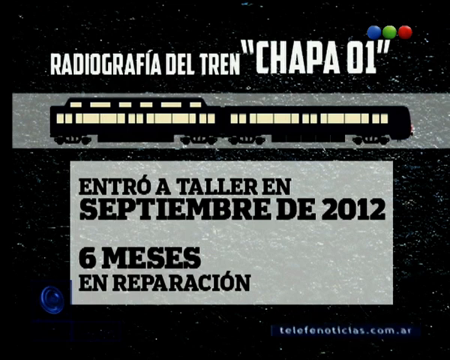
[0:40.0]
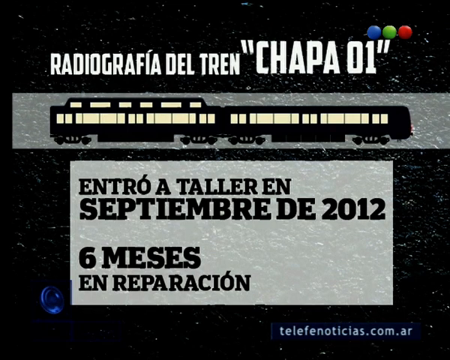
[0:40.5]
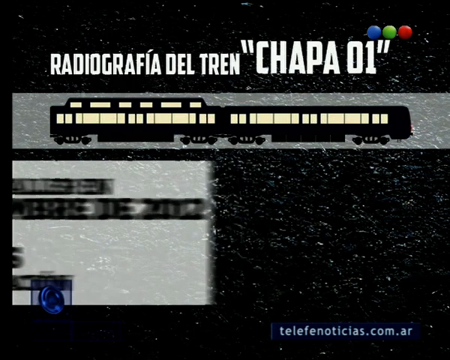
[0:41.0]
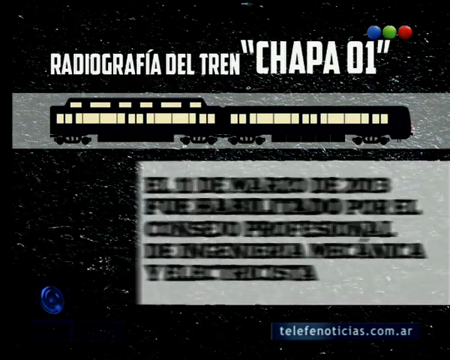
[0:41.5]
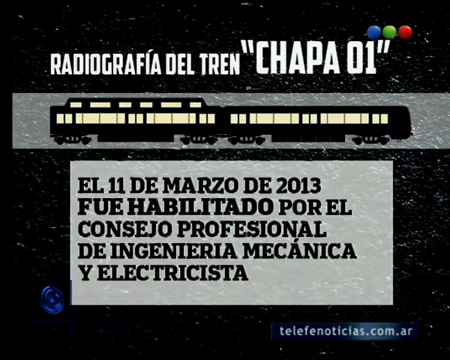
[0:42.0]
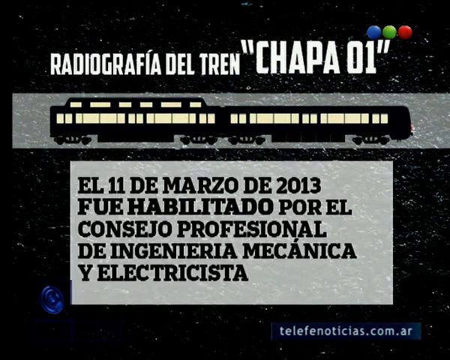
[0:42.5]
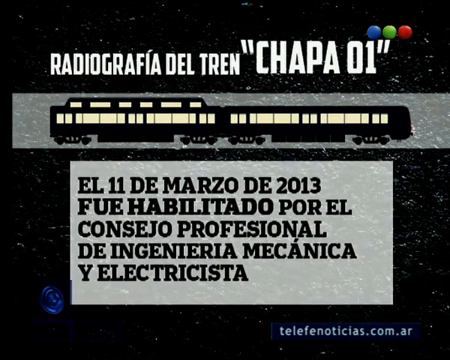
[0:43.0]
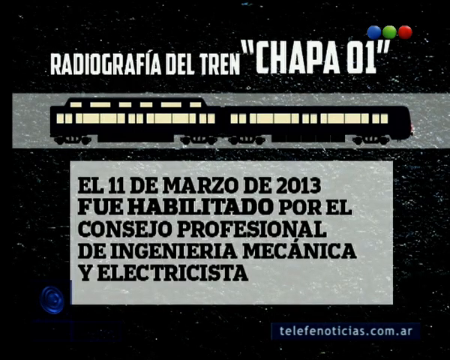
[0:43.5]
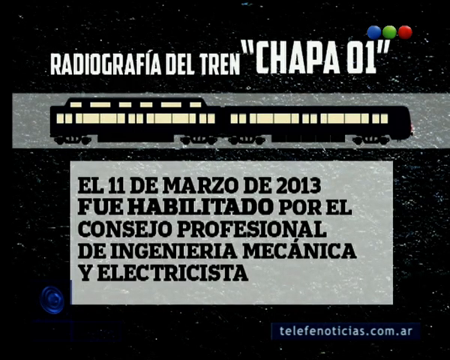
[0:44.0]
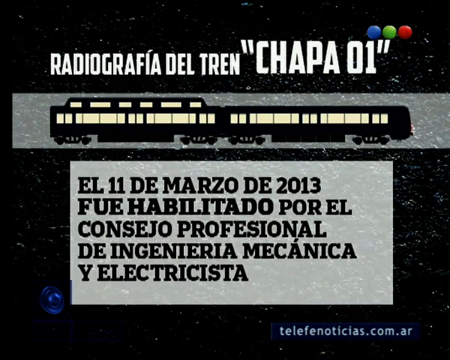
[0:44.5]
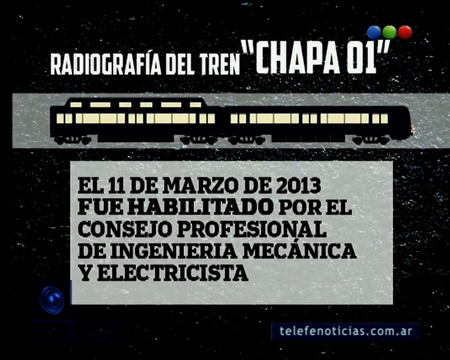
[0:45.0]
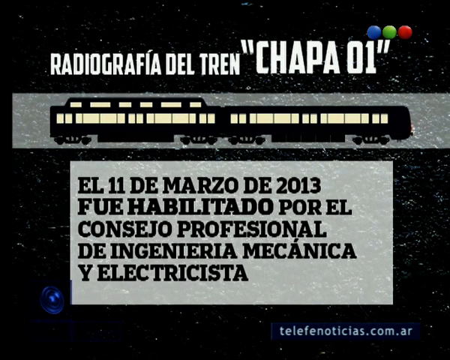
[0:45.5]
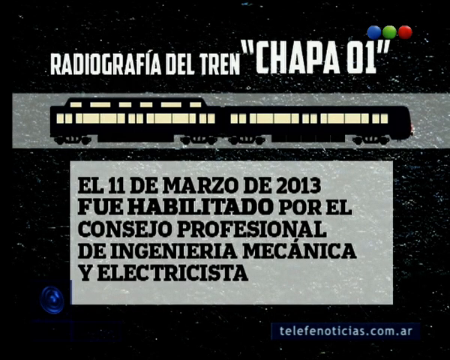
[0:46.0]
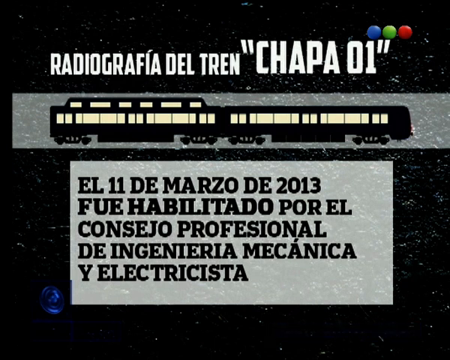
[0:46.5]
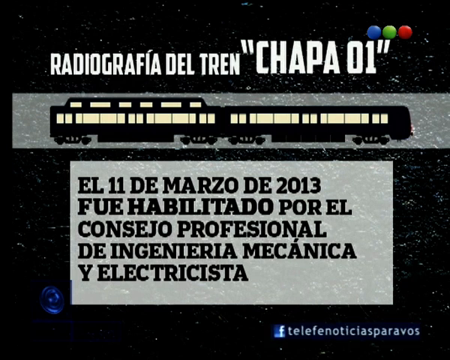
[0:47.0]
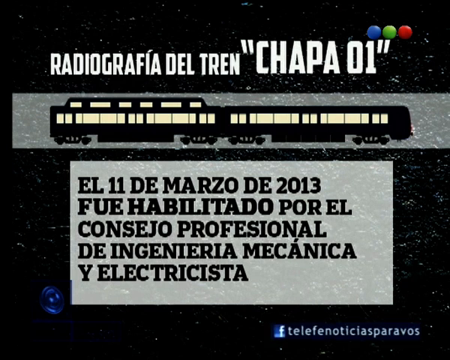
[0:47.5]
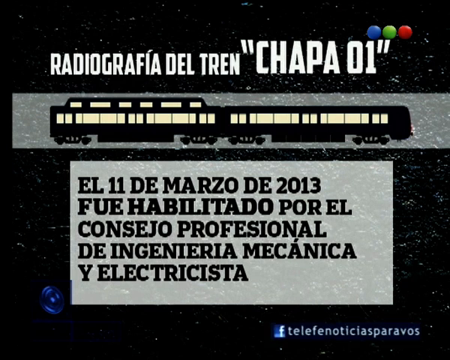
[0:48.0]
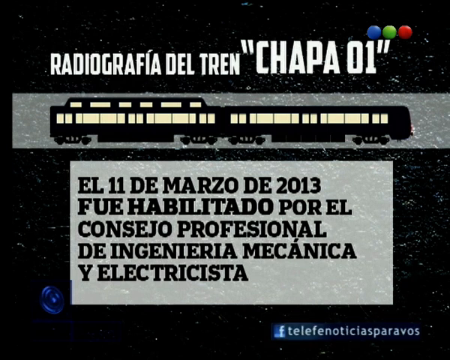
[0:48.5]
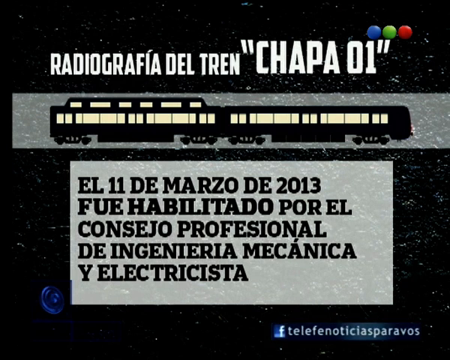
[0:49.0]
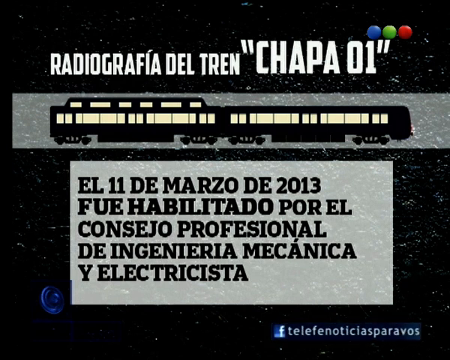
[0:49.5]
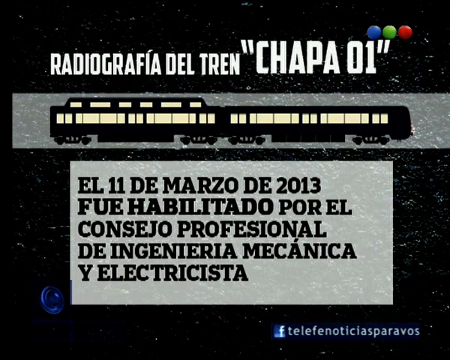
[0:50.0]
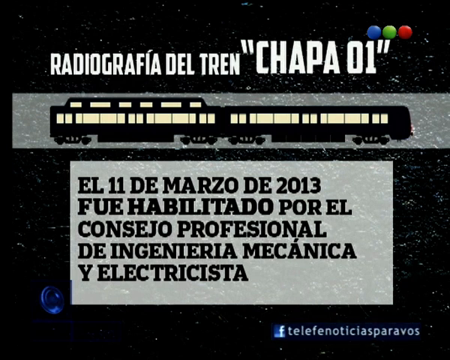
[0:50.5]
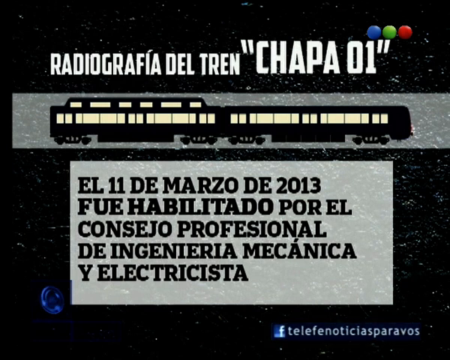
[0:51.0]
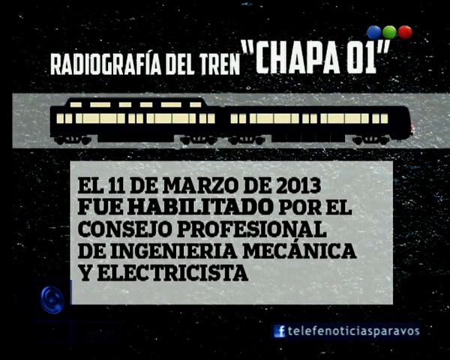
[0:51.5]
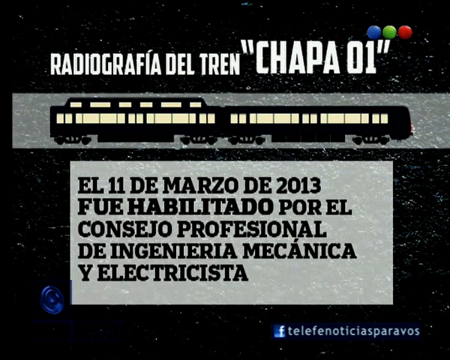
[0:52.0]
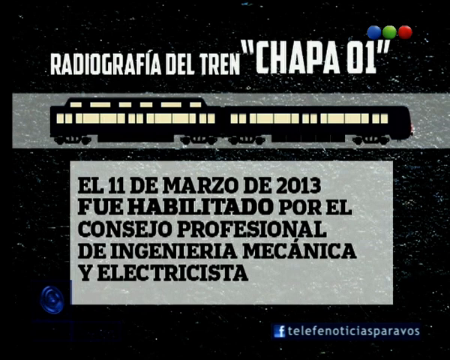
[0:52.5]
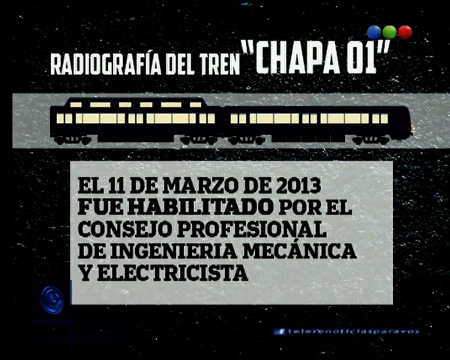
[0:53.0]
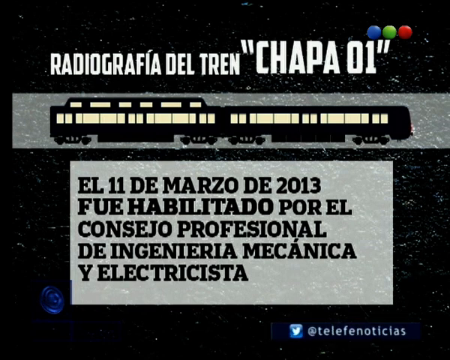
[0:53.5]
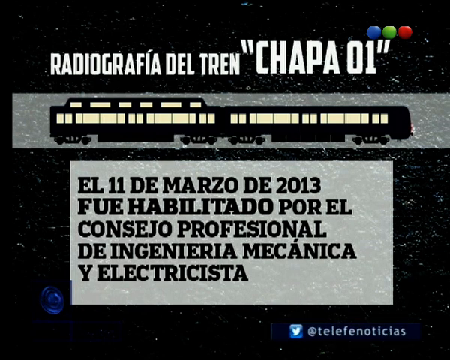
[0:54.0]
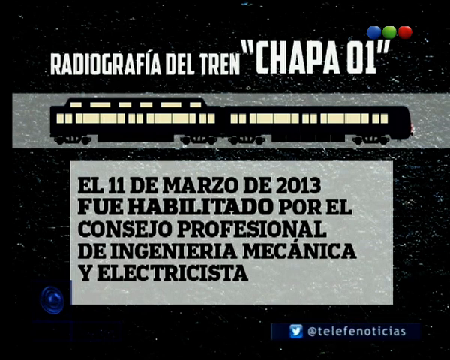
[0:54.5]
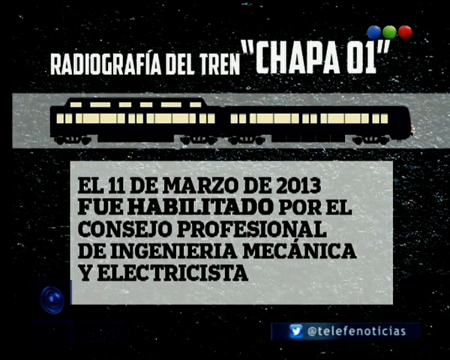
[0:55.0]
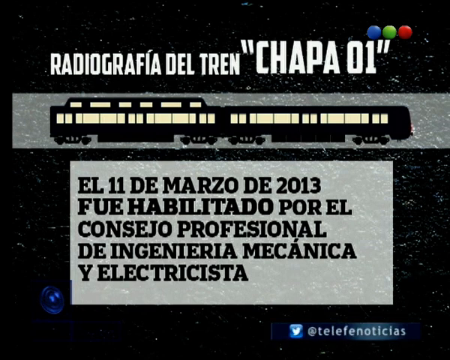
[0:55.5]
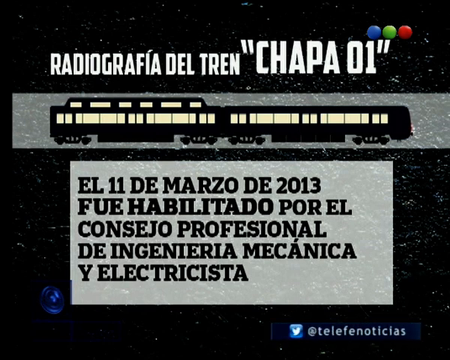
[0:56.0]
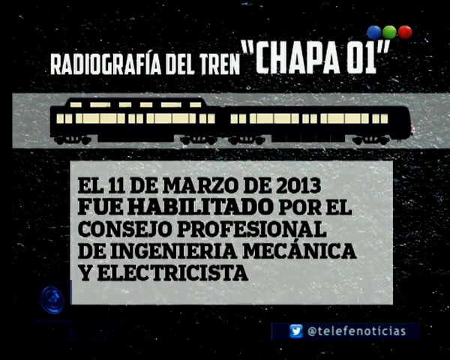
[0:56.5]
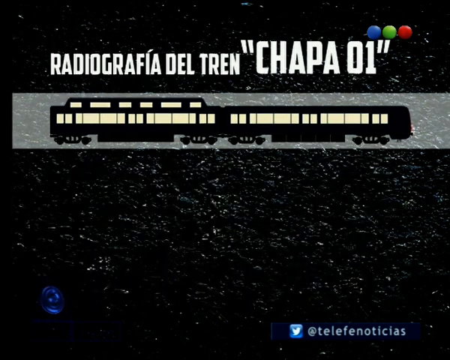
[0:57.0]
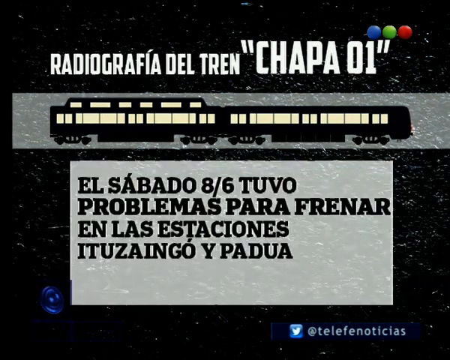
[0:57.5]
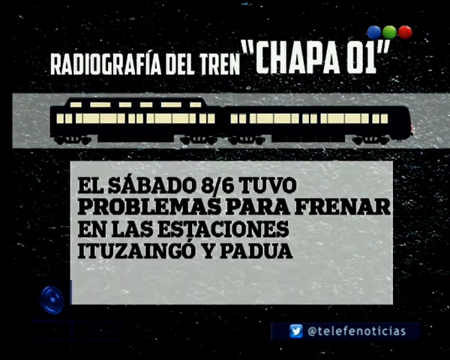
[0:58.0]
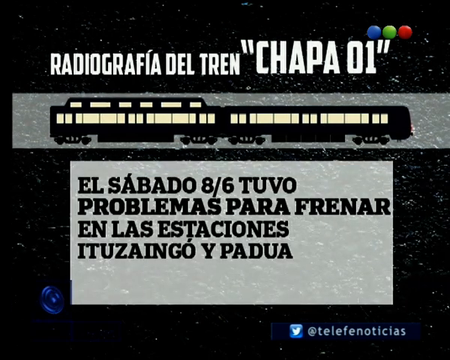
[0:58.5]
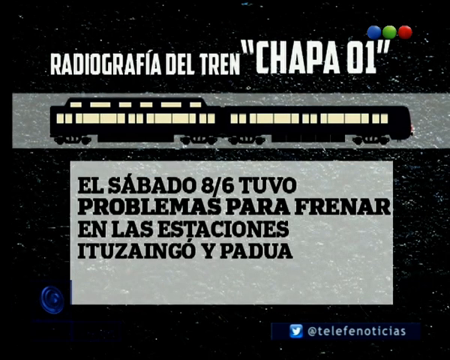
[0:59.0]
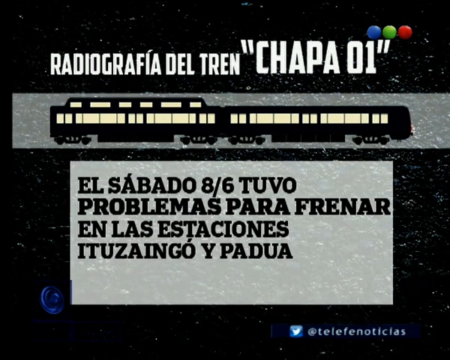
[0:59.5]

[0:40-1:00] More translated text follows. One line reads that on March 11, 2018, the train "was certified by the Professional Council of Mechanical and Electrical Engineering." Another report then appears saying that on Saturday the train had problems with braking at the Ituzaingo and Padua stations.